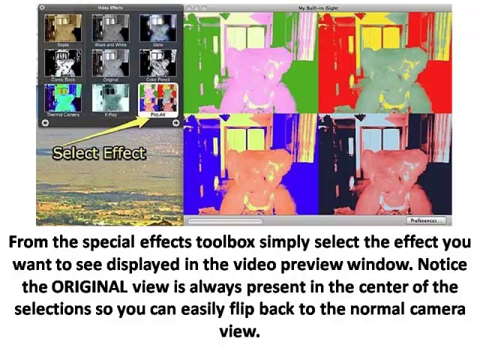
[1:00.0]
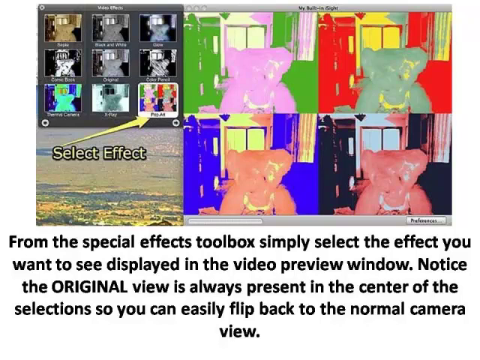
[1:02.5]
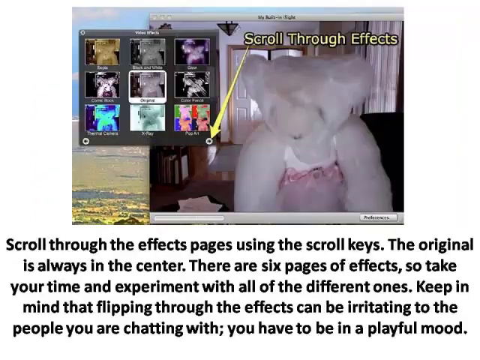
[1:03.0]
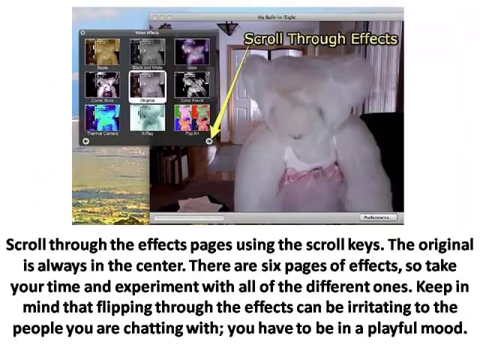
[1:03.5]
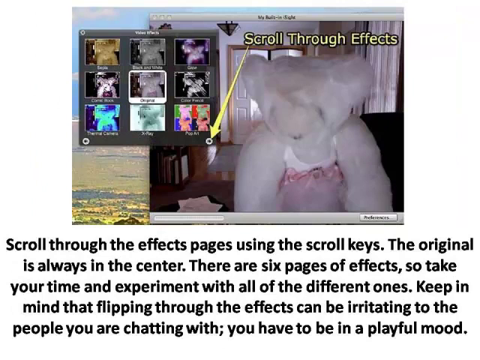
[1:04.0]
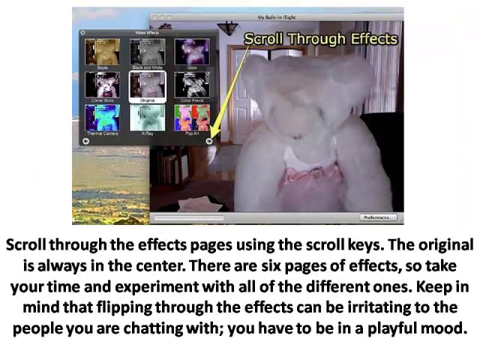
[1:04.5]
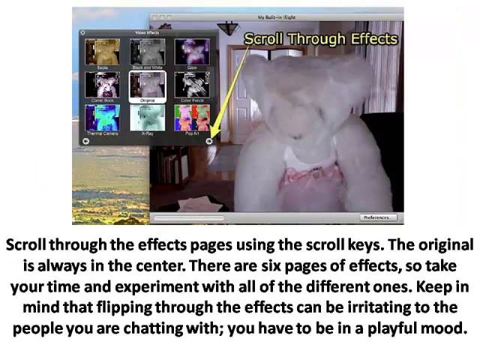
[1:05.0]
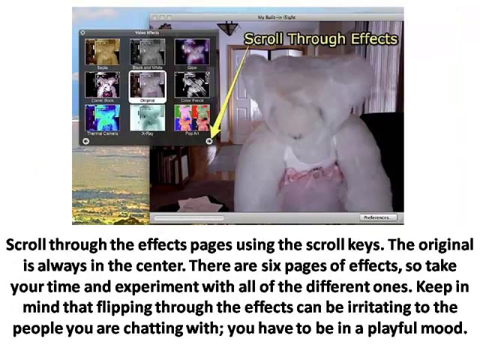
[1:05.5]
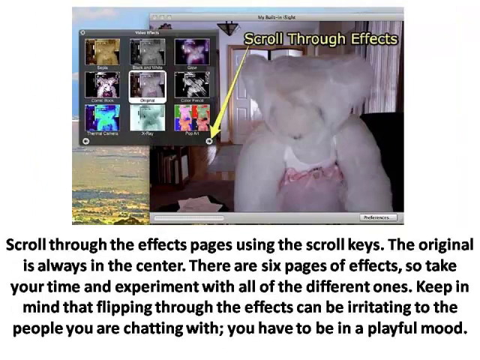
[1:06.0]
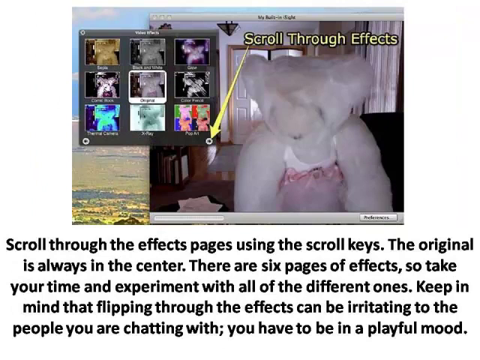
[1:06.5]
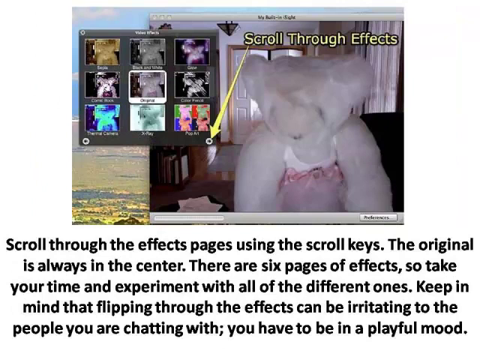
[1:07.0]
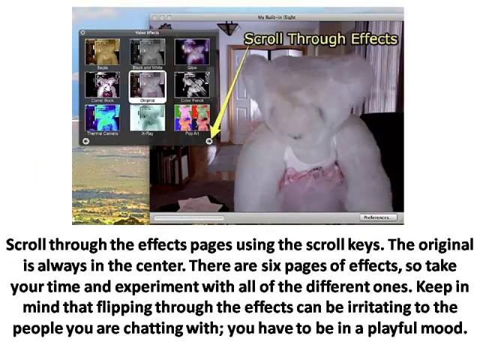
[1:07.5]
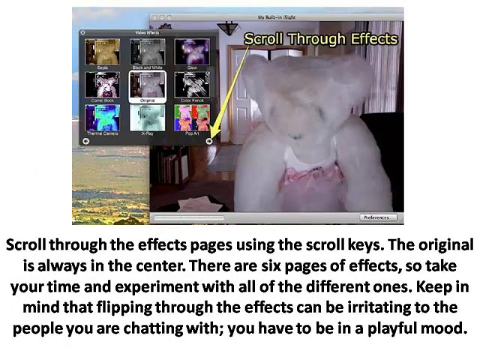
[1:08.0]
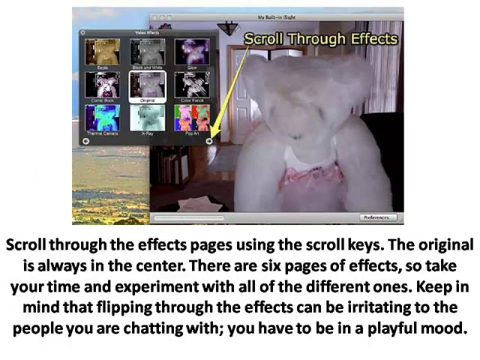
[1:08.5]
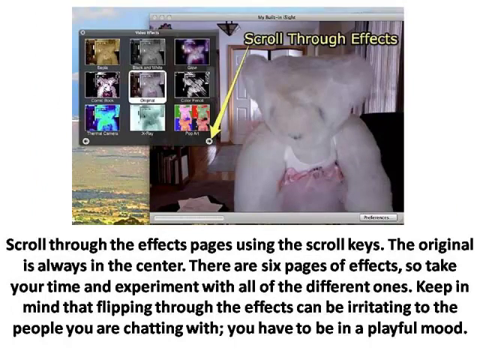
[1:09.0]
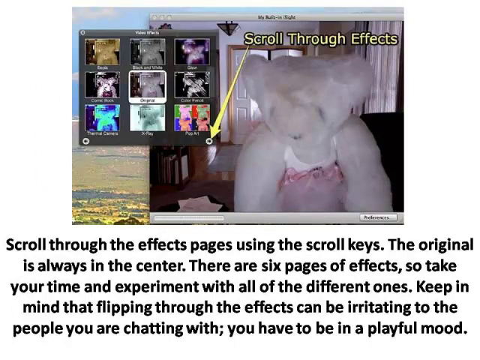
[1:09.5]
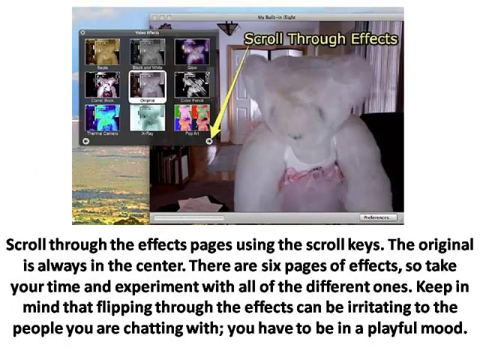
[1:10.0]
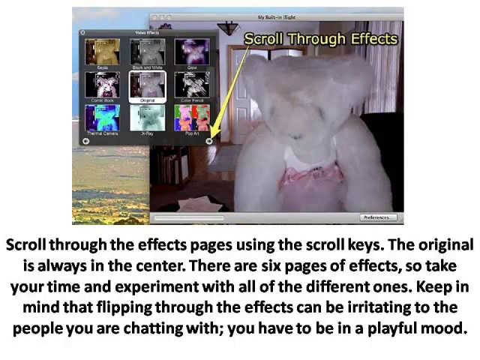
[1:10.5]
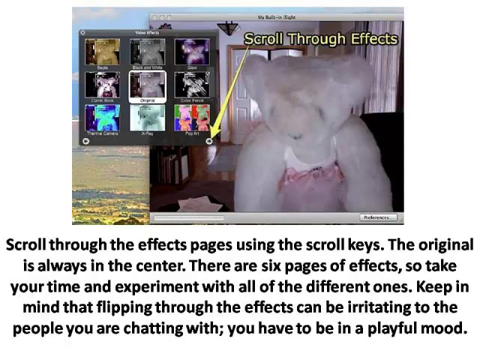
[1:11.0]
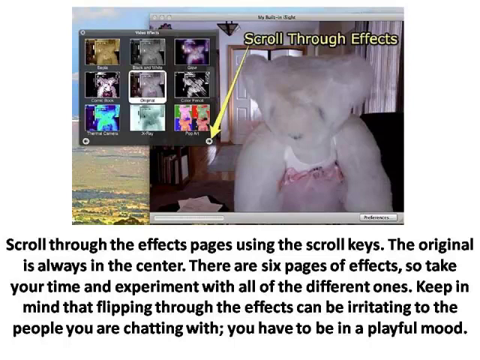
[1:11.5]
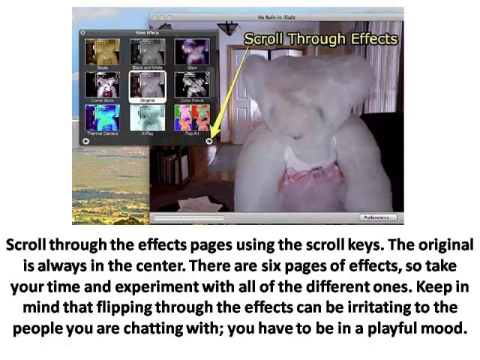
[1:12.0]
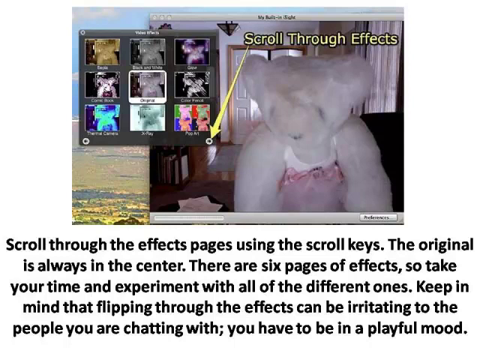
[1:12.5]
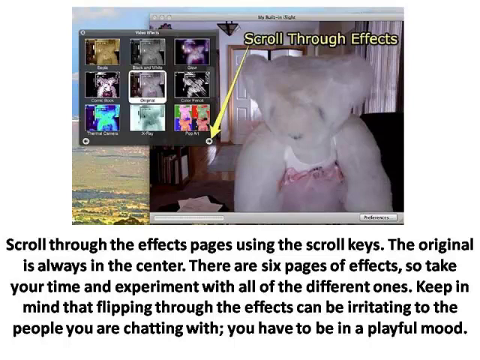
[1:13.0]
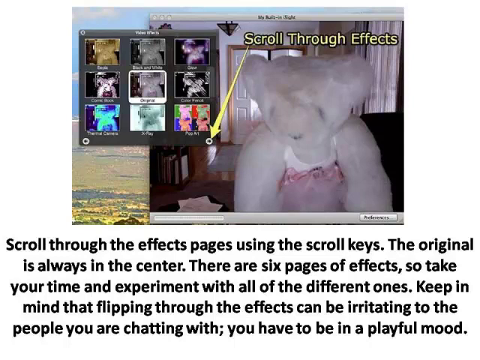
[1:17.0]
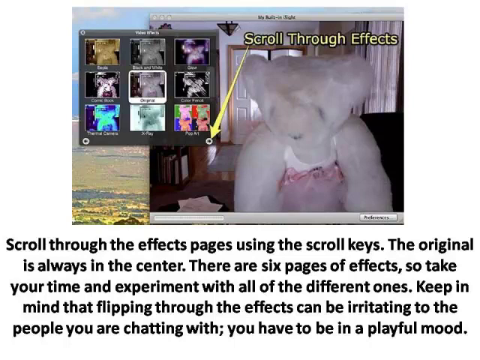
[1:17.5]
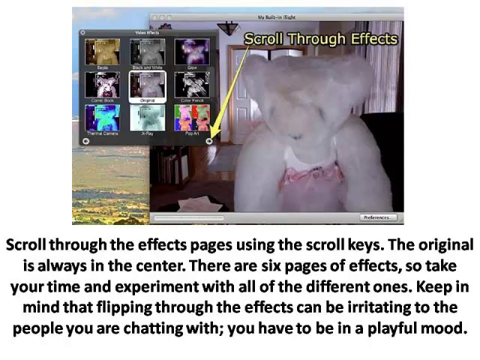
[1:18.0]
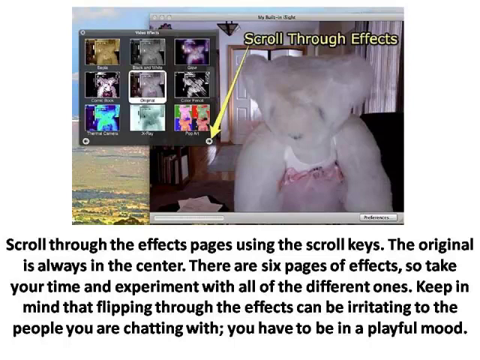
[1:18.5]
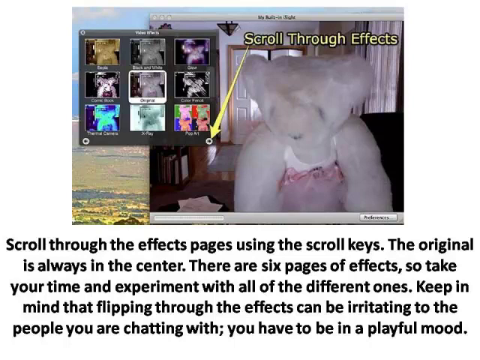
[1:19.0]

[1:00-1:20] Some of the effects are shown in use. A grid display at the top left shows all the different effects, with the text "select effect" and an arrow pointing at one effect whose name is too small to read. On the right, the image of the bear is split into four images, each with a different color scheme: the top left is pink and green, the top right red and yellow, the bottom left blue and yellow, and the bottom right kind of pink and black. Text reads: "from the special effects toolbox simply select the effect you want to see displayed in the video preview window. Notice the original view is always present in the center of the selections. So you can easily flip back to the normal camera view." Further text reads: "scroll through the effects pages using the scroll keys. The original is always in the center. There are six pages of effects. So take your time and experiment with all the different ones. Keep in mind that flipping through the effects can be irritating to people you're chatting with. You have to be in a playful mood."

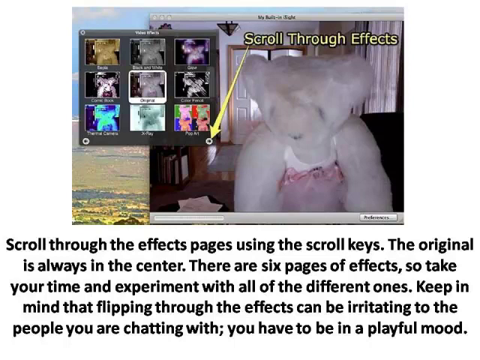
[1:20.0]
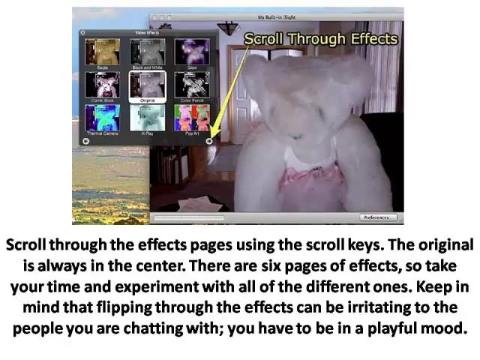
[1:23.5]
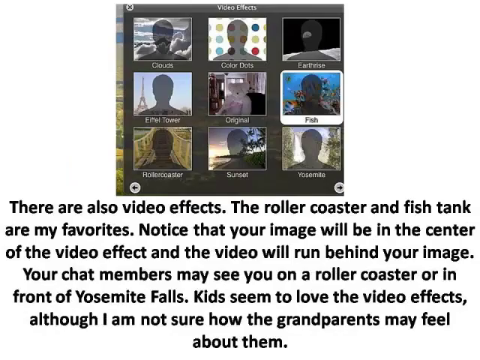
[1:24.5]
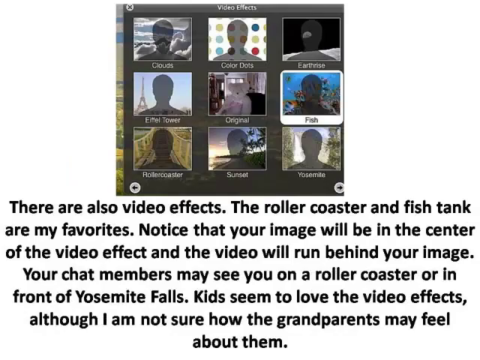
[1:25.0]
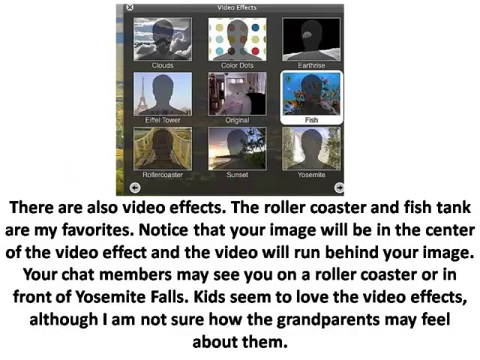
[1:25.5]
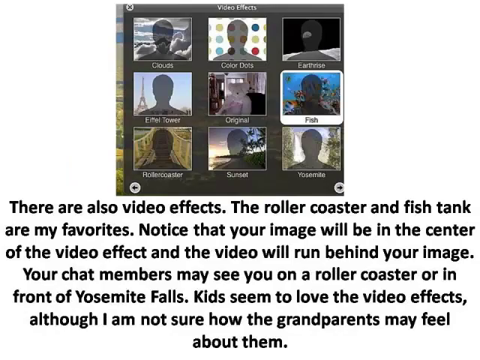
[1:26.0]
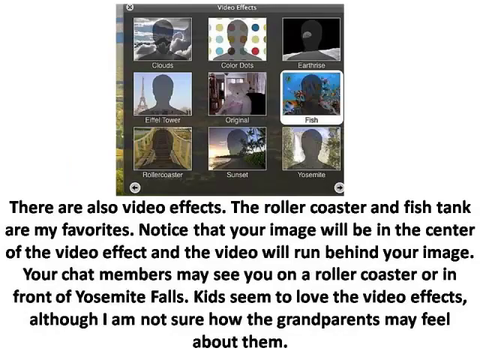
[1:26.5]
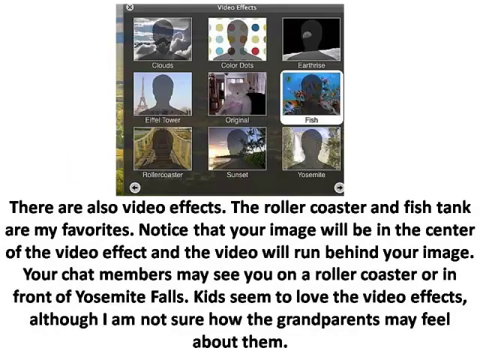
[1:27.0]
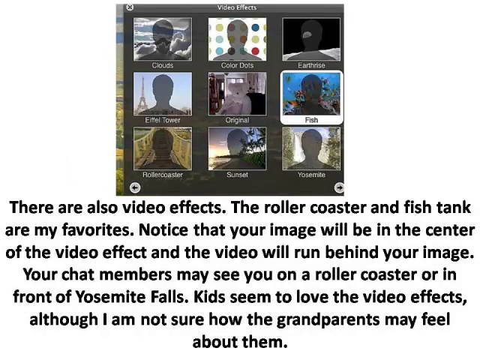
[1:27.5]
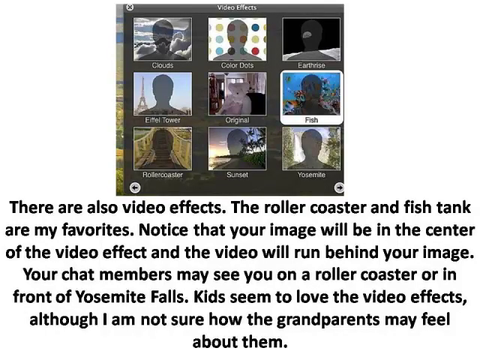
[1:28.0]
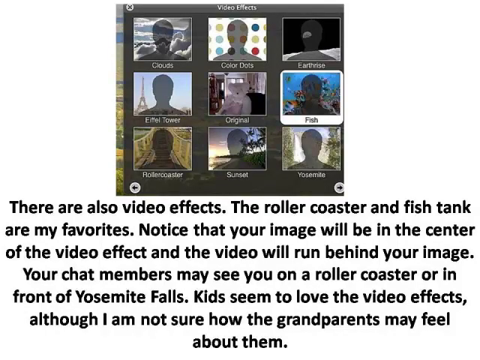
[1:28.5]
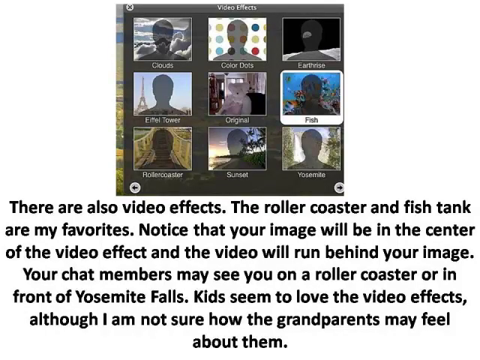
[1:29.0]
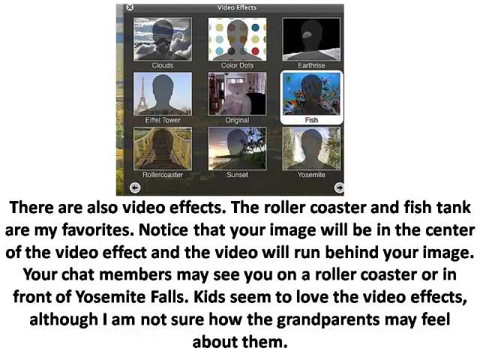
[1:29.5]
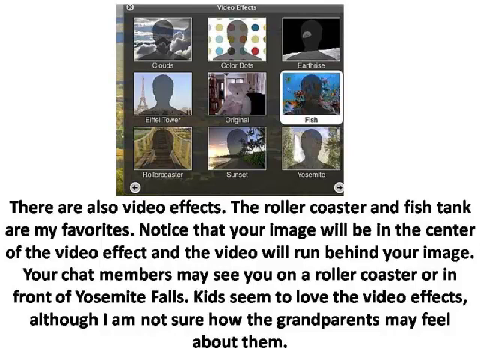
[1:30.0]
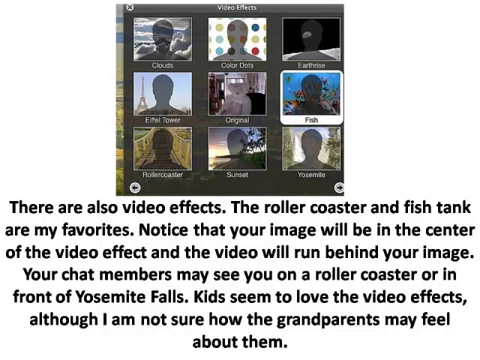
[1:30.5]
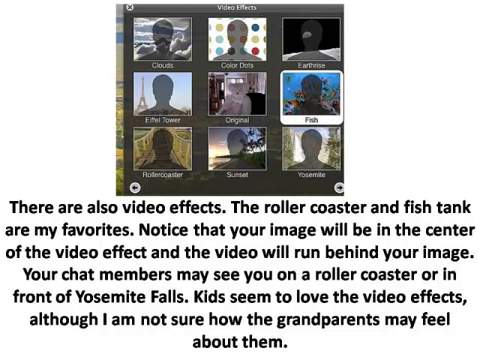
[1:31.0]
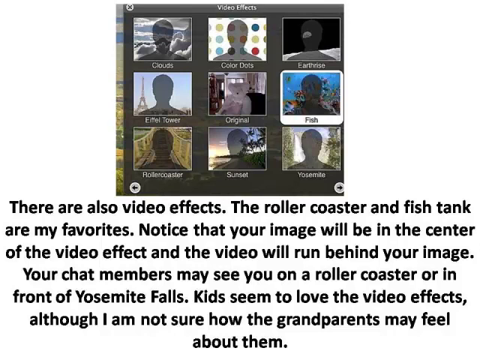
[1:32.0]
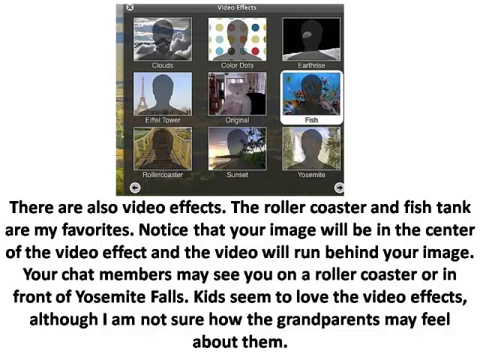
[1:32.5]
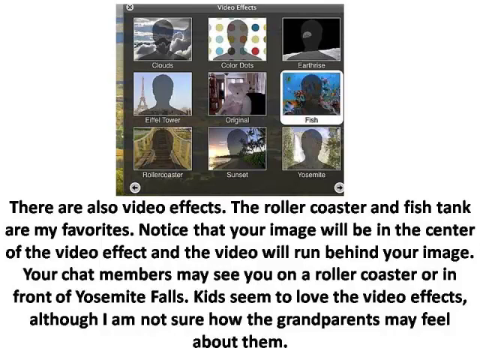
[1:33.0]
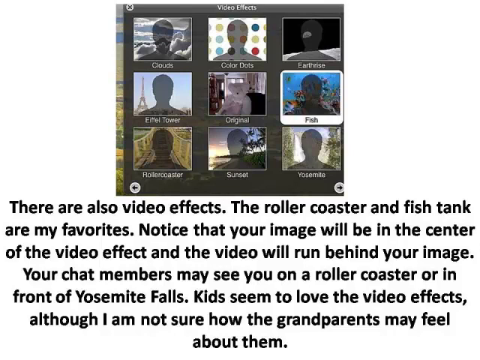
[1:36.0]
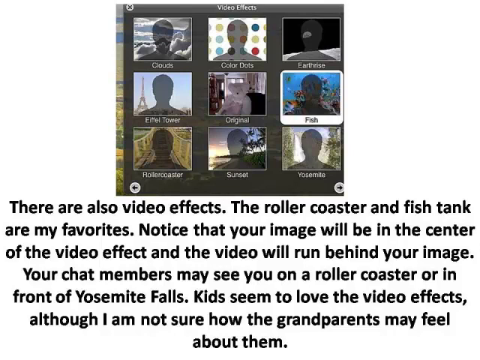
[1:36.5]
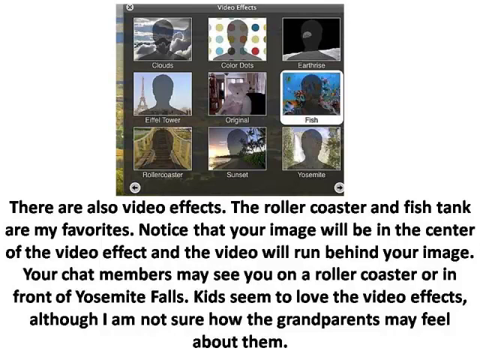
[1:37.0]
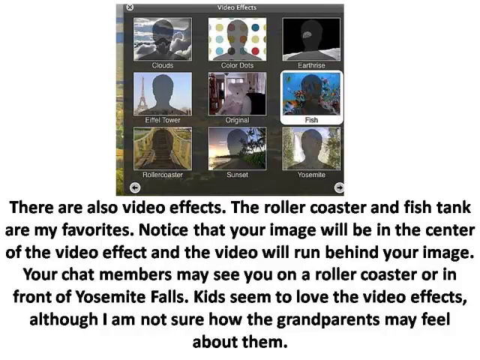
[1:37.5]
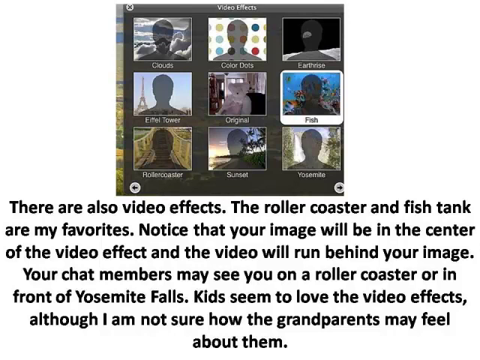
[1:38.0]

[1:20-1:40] The effects menu is still up on the left, and the original image of the teddy bear in a nondescript living room is on the right. The text reads: "scroll through the effects pages using the scroll keys. The original is always in the center. There are six pages of effects. So take your time and experiment with all the different ones. Keep in mind that flipping through the effects can be irritating to the people you're chatting with. You have to be in a playful mood." Next the text reads: "there are also video effects. The roller coaster and fish tank are my favorites. Notice that your image will be in the center of the video effect. And the video will run behind your image. Your chat members may see you on a roller coaster or in front of Yosemite Falls. Kids seem to love the video effects. Although I am not sure how grandparents may feel about them." An example of the video effects follows: three rows of three with the original image in the middle, surrounded by eight options: clouds, color dots, earth rise, fish tank, Eiffel Tower, roller coaster, sunset and Yosemite.